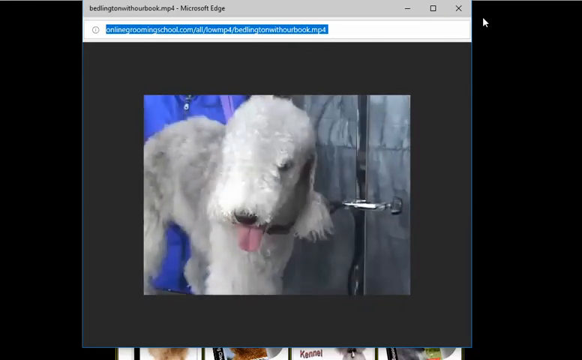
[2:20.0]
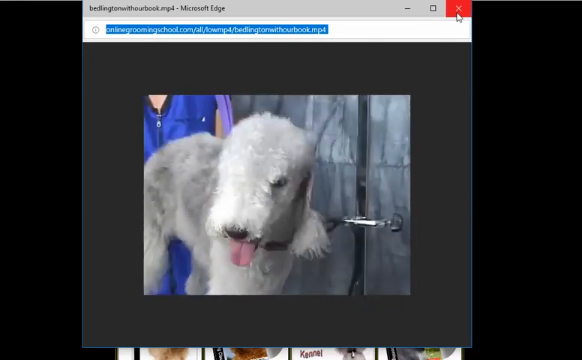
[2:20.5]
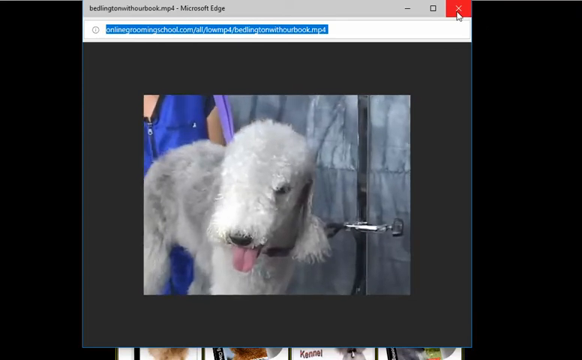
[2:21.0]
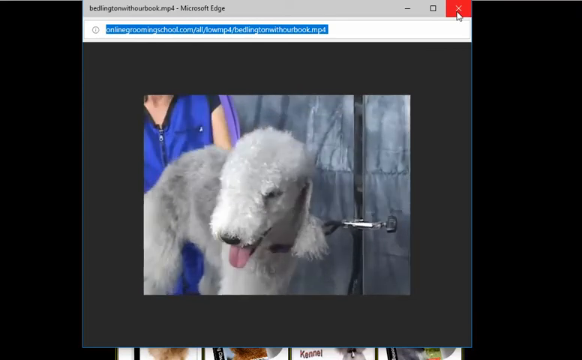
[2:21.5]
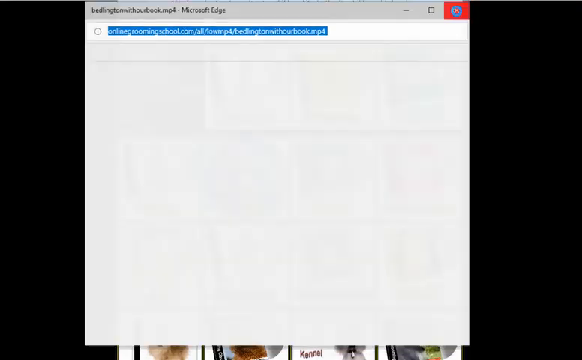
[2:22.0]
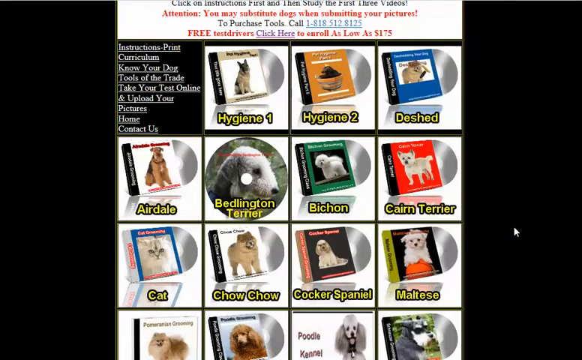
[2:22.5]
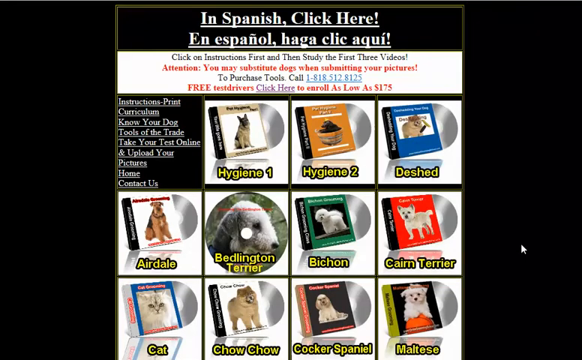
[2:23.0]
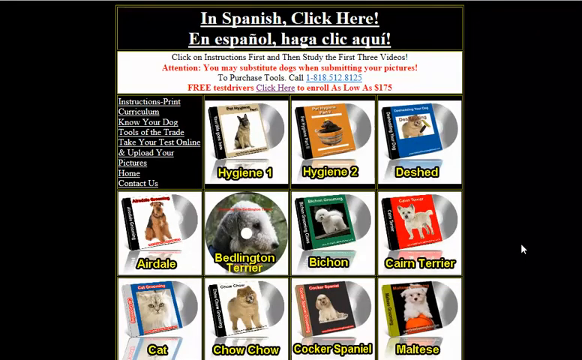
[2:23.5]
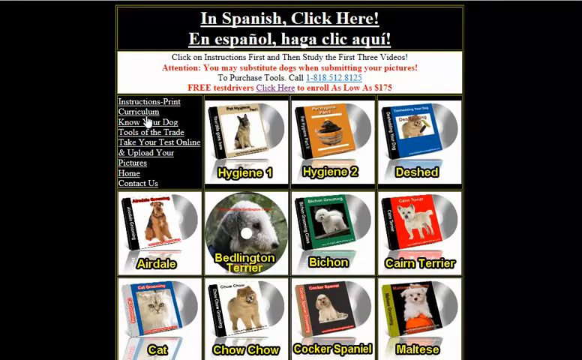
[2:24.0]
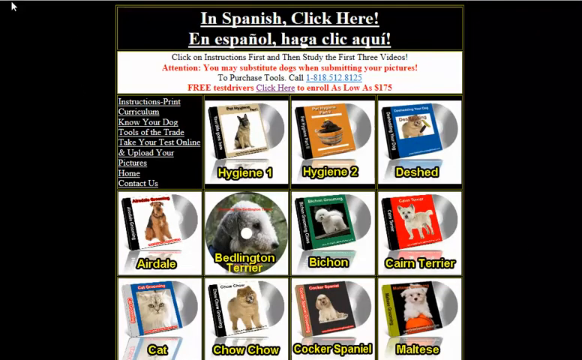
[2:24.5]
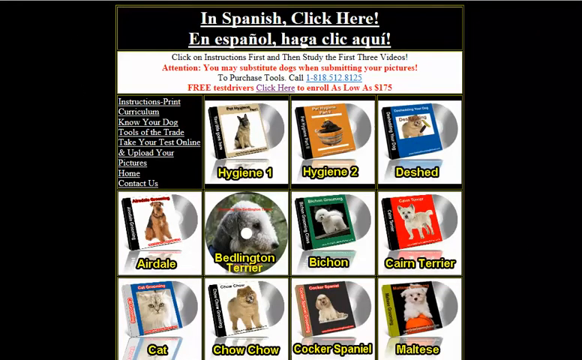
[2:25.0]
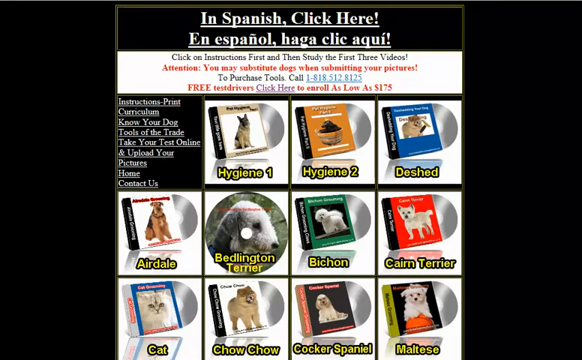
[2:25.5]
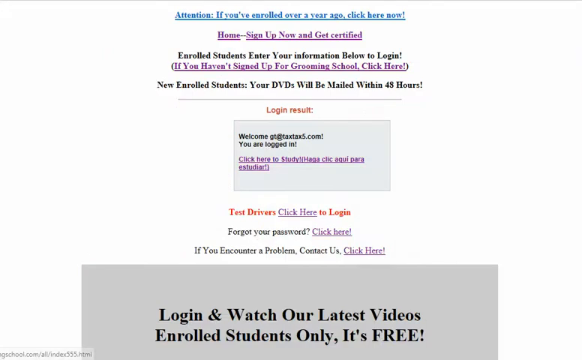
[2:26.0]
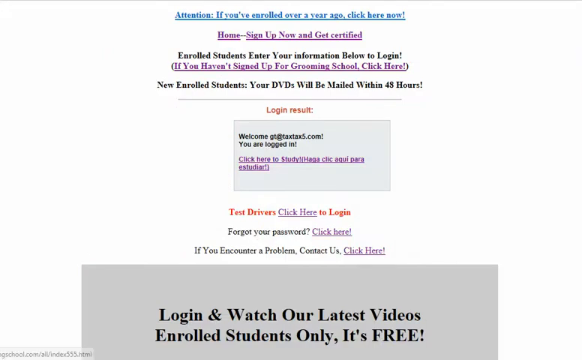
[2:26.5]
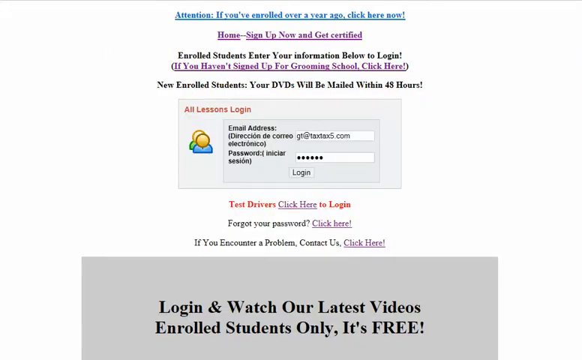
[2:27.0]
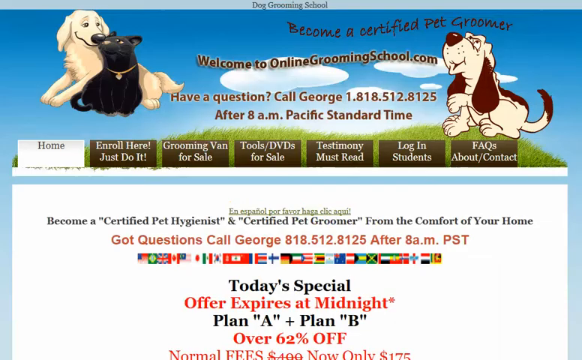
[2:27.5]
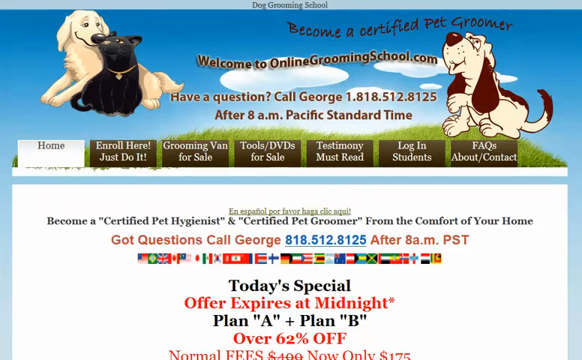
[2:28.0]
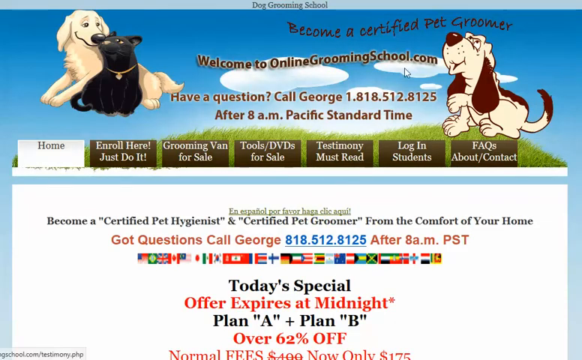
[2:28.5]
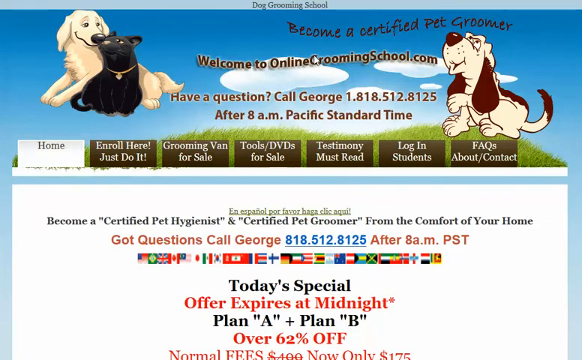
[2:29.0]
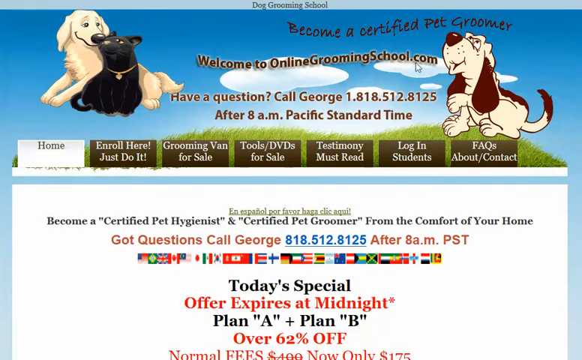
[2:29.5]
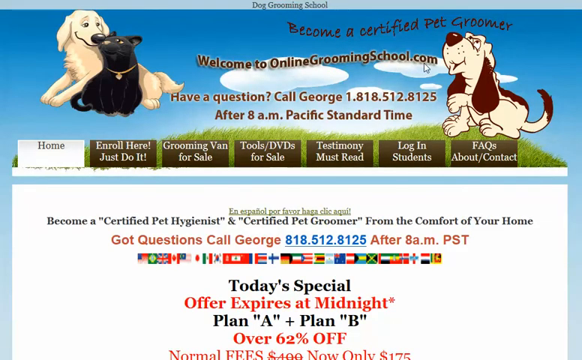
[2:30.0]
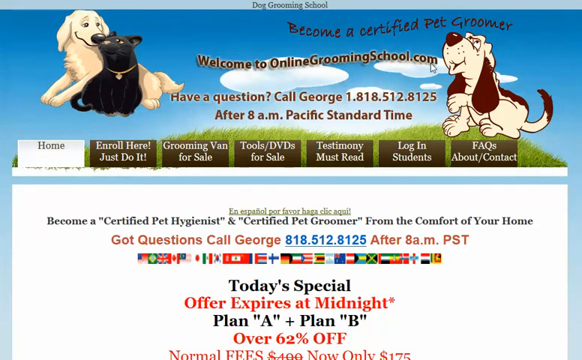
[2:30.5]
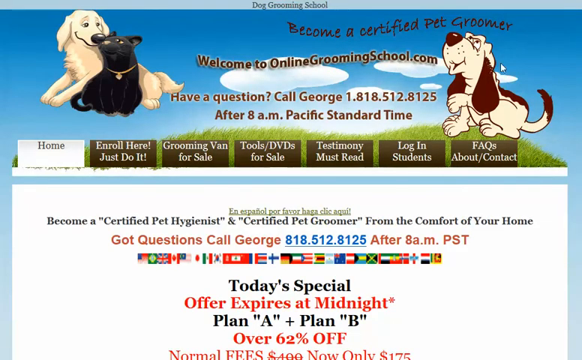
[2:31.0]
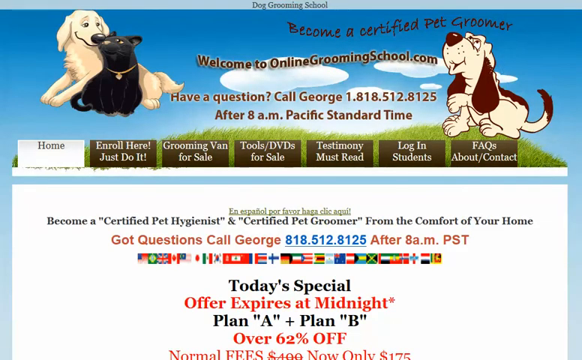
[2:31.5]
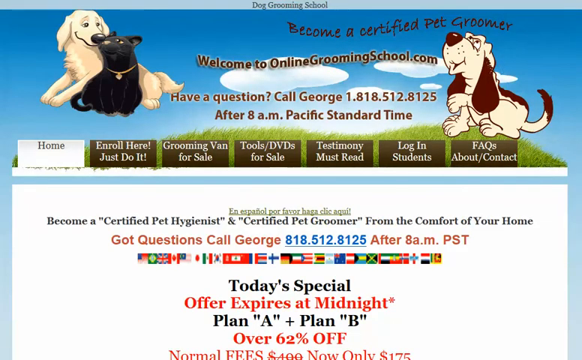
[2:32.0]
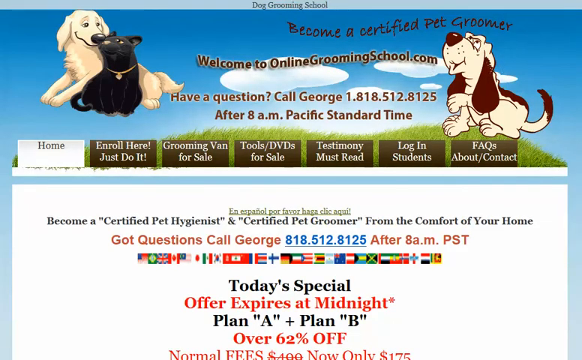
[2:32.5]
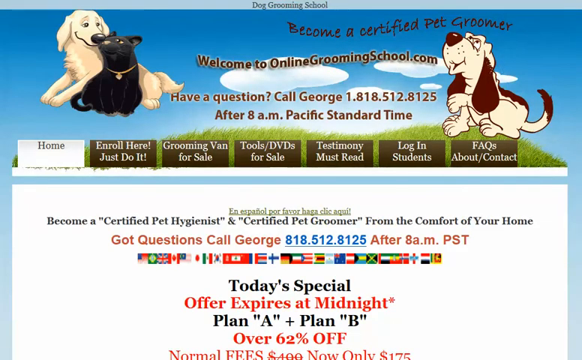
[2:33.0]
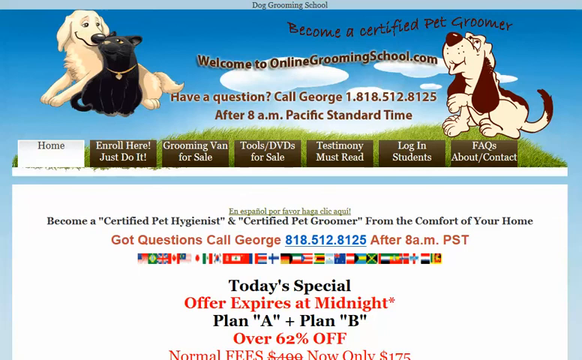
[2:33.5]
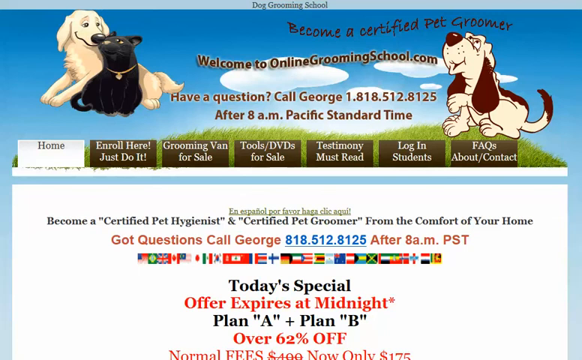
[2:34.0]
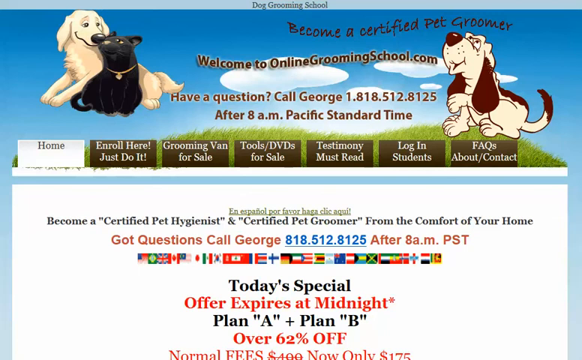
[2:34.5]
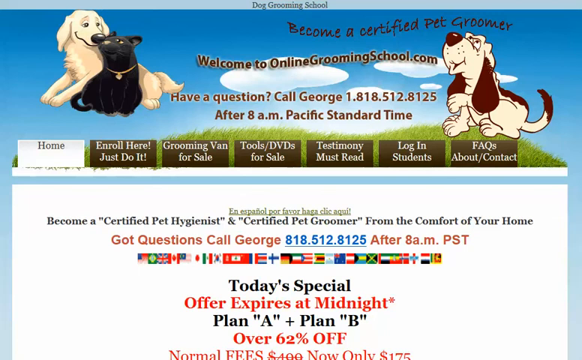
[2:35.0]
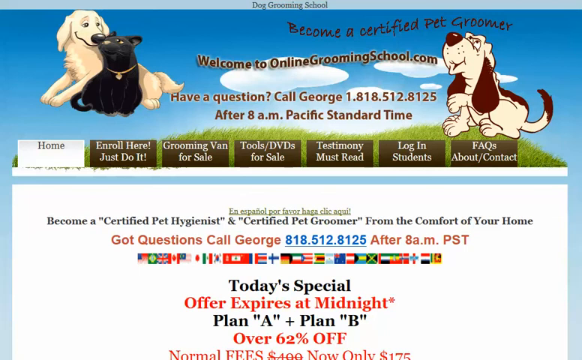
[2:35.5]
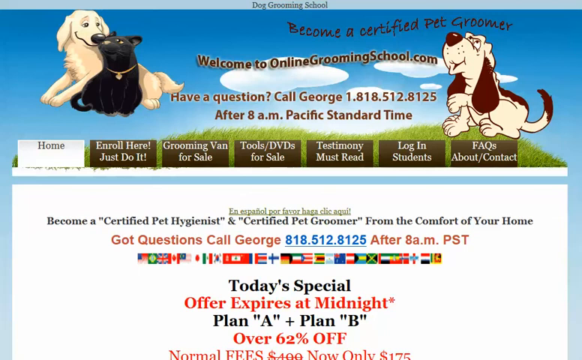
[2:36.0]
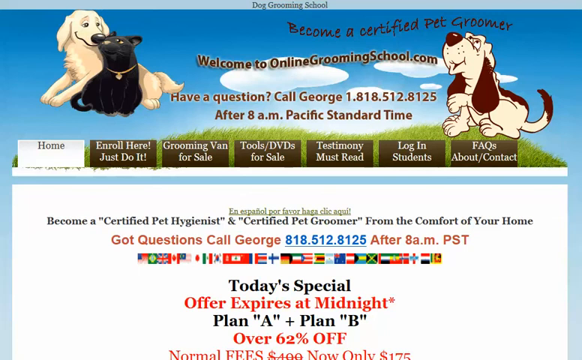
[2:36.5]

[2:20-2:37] The video on the dog grooming website continues, showing the Bedlington Terrier being washed by Yvonne in a groomer's parlour. She has brown hair and wears a blue zip-up protective short-sleeved jacket. The grey, curly, wire-haired Bedlington Terrier is attached to the grooming bar with a purple lead, and his tongue is hanging out. Yvonne talks to the camera. The mouse then moves up to the top right-hand corner and clicks close, and the page reverts to the disc page. The mouse goes to the top of the screen, the login page appears, and then the home page. The mouse hovers on "WelcomeToOnlineGroomingSchool.com", showing the details of where to call and the offers.